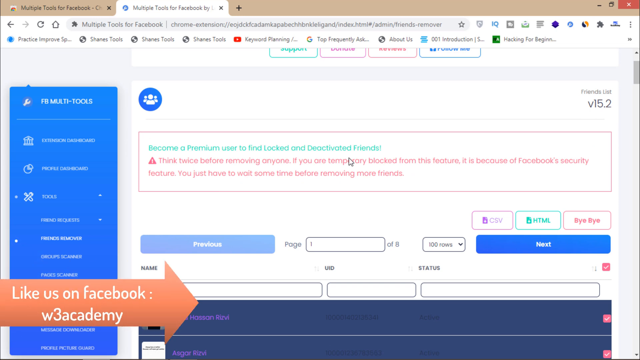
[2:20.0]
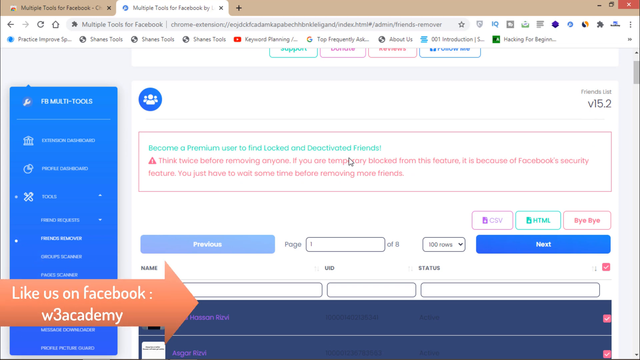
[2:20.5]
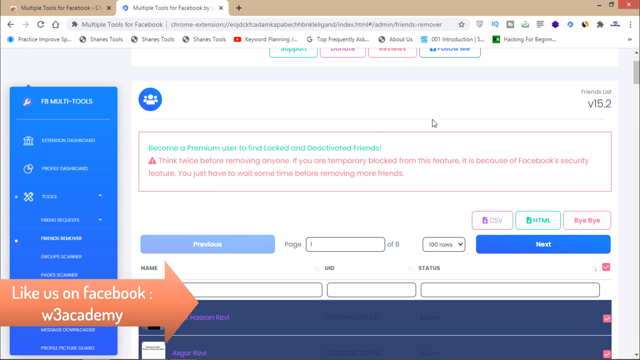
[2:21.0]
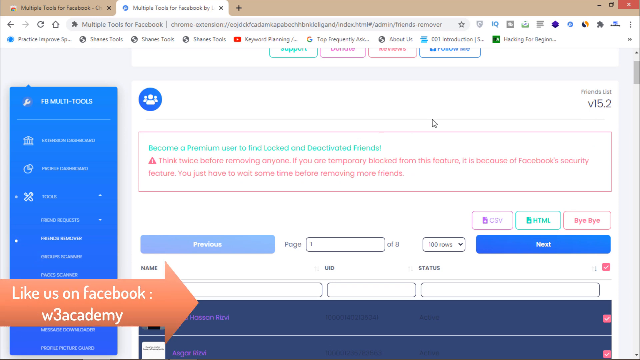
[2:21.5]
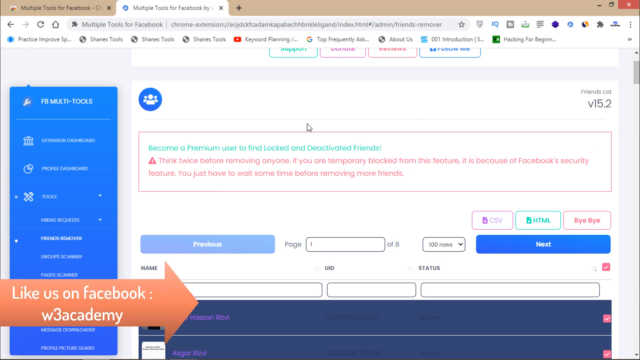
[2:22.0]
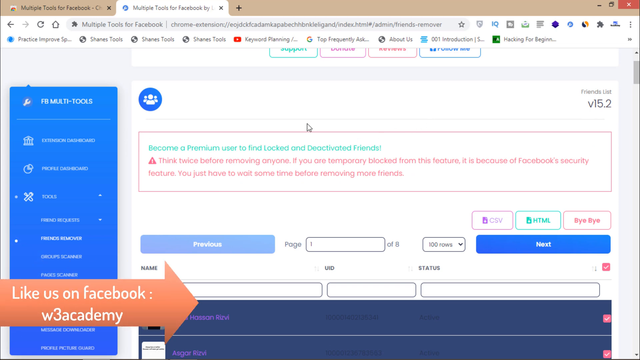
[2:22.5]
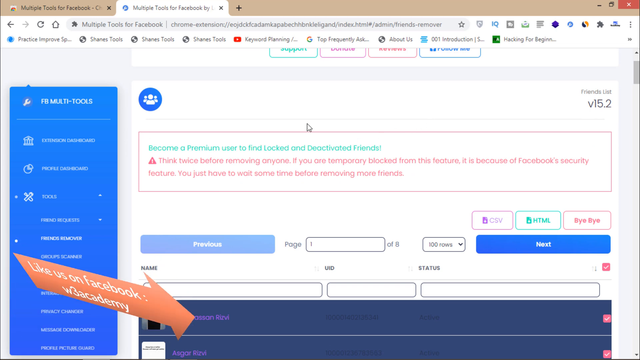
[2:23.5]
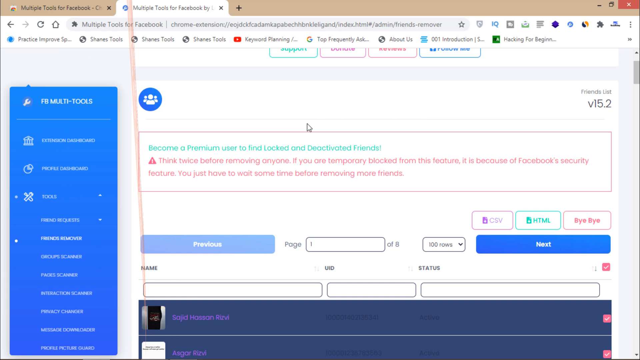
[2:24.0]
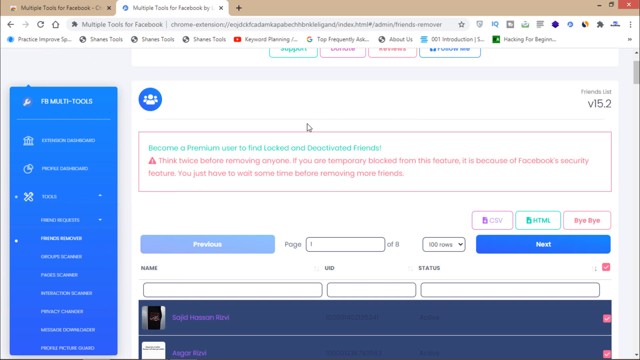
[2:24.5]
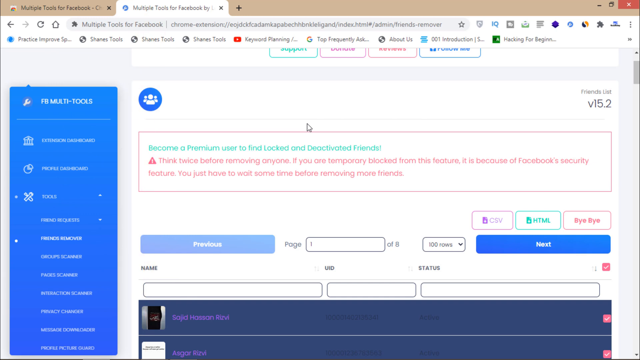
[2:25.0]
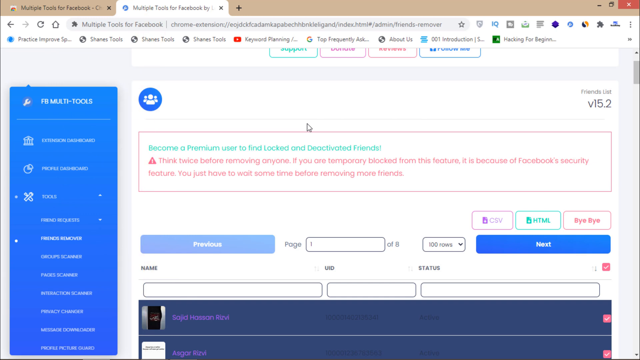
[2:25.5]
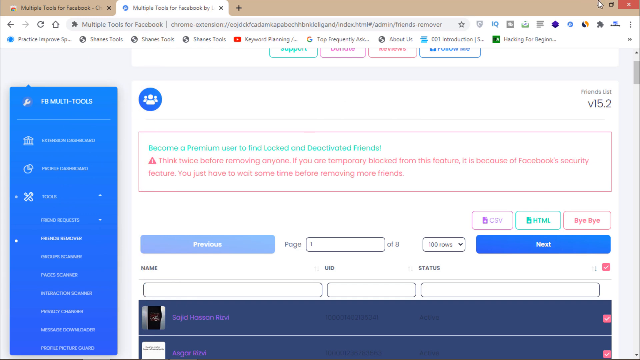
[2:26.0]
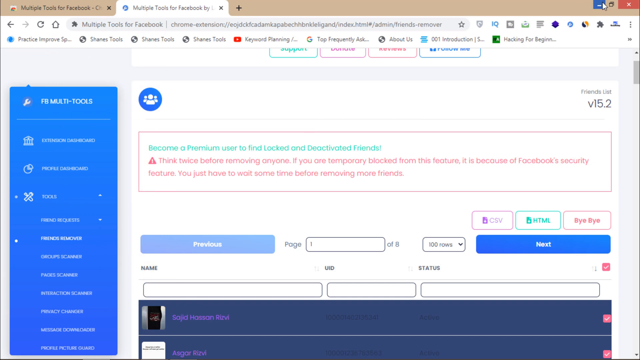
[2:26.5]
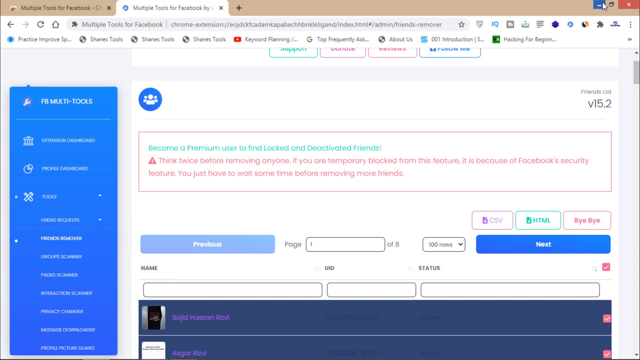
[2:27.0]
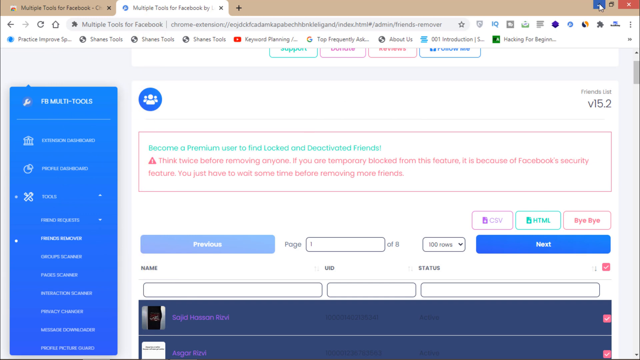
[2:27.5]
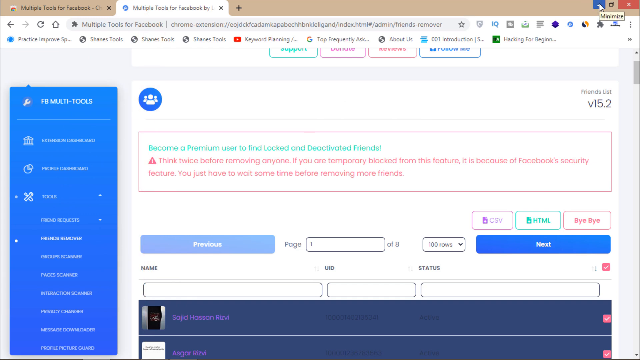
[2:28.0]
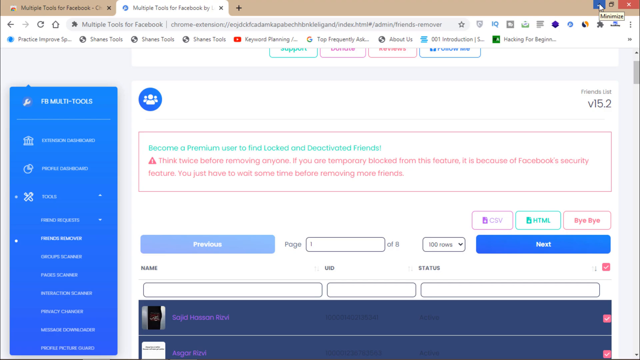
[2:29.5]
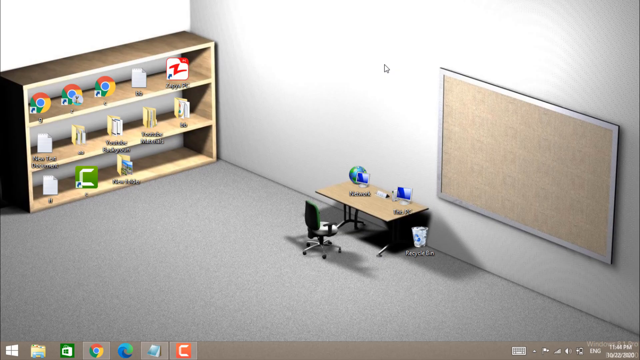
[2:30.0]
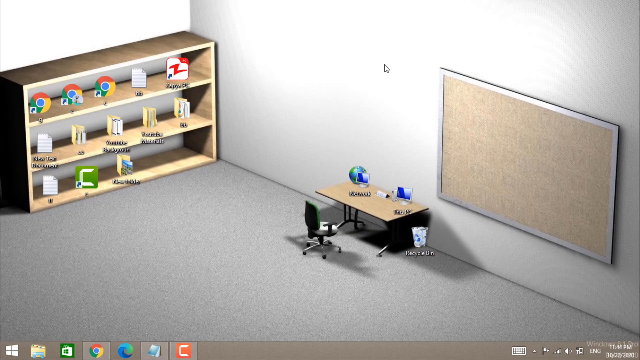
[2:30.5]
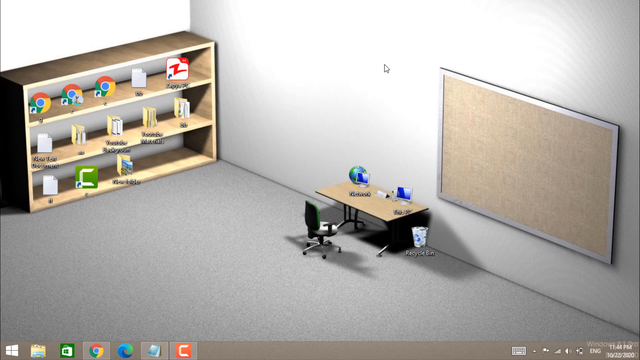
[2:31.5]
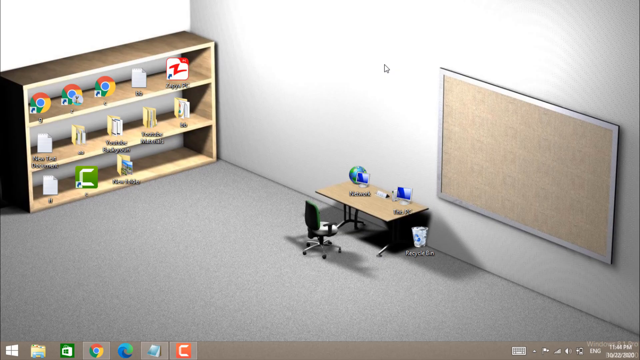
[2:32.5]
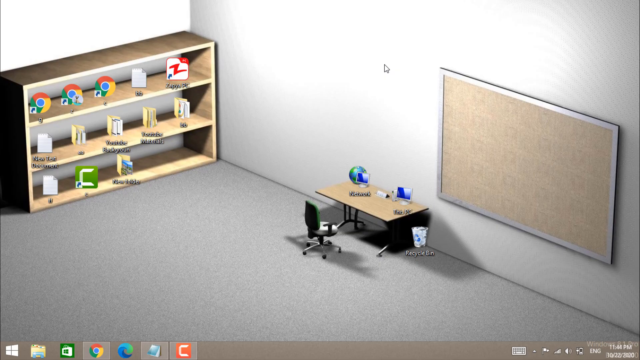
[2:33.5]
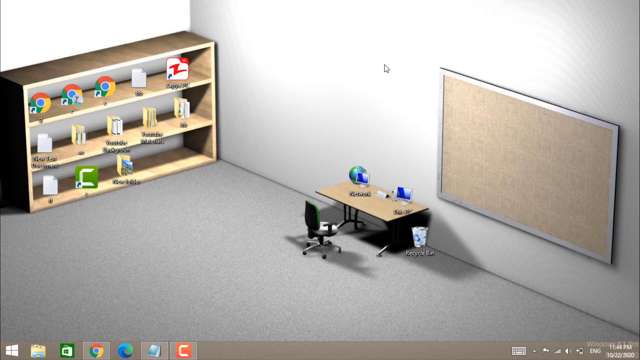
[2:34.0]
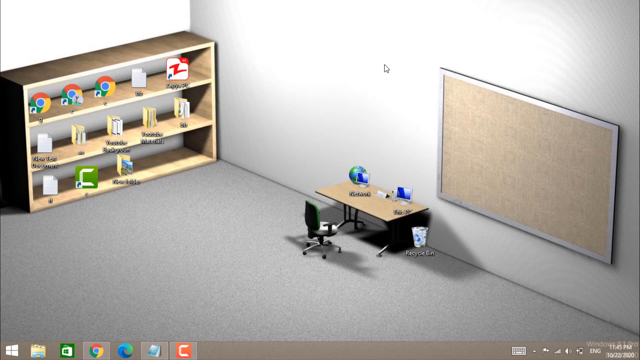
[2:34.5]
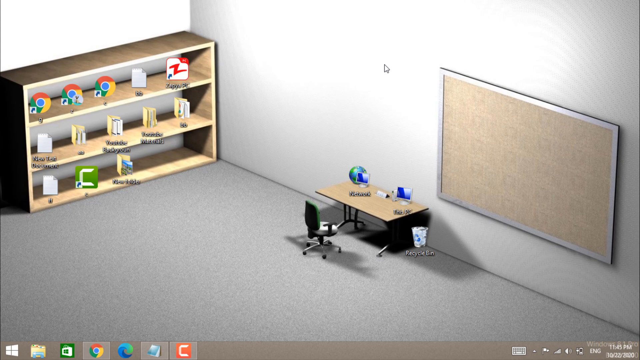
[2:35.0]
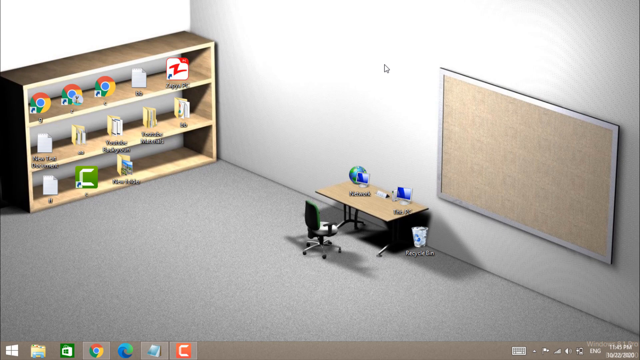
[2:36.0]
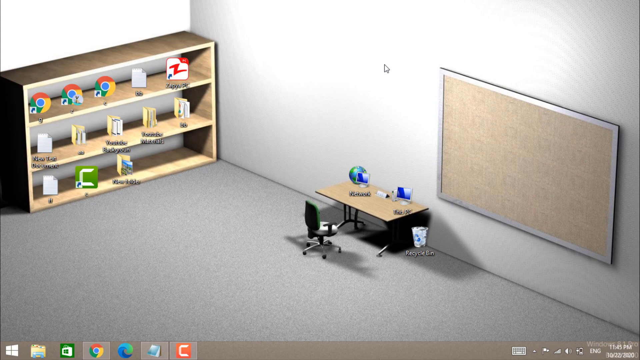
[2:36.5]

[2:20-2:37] Two tabs are open on the web page, which says multiple tools for Facebook by Chrome or something similar, apparently an extension. It shows the text "become a premium user to find locked and deactivated friends. Think twice before removing anyone," along with the notice about temporary blocks from Facebook's security feature. 100 rows of friends are selected, but nothing is done with them. The window is minimized, revealing an animation: a desk against a white wall, a brown bulletin board, a shelf with a bunch of different icons, including three Google Chrome icons and a bunch of documents, and gray carpet, in what seems to be an office or a classroom.